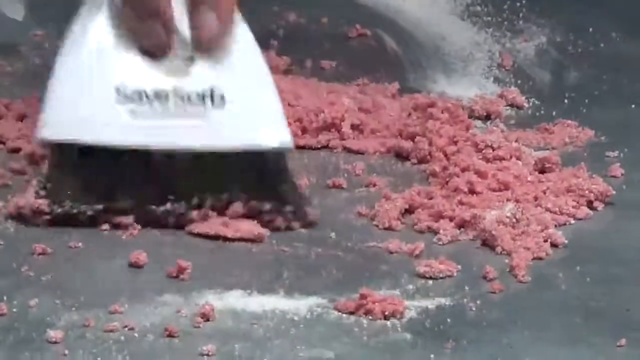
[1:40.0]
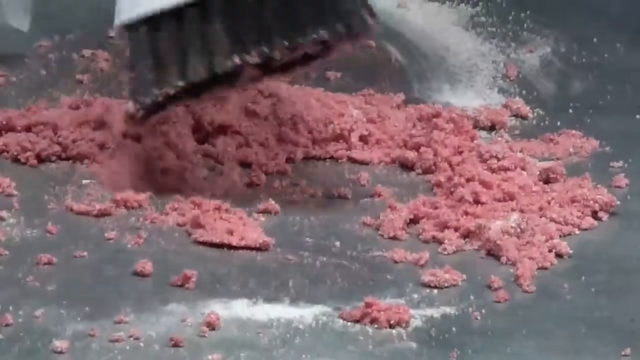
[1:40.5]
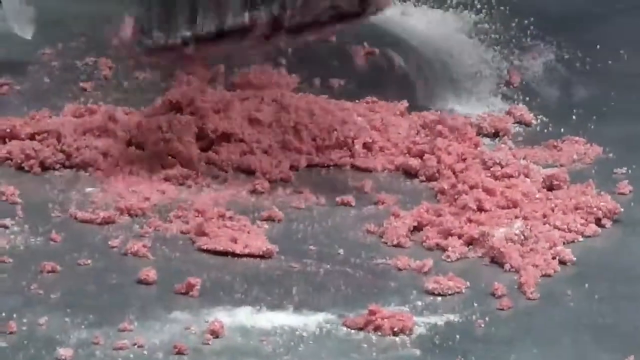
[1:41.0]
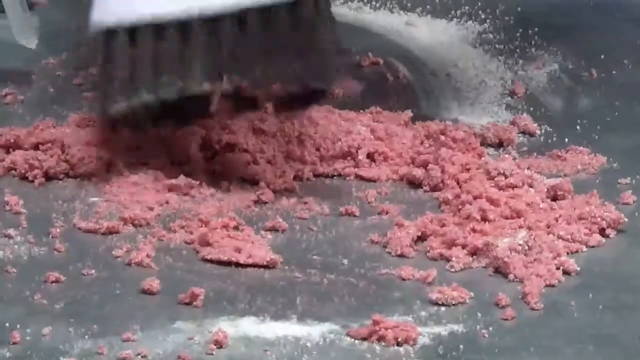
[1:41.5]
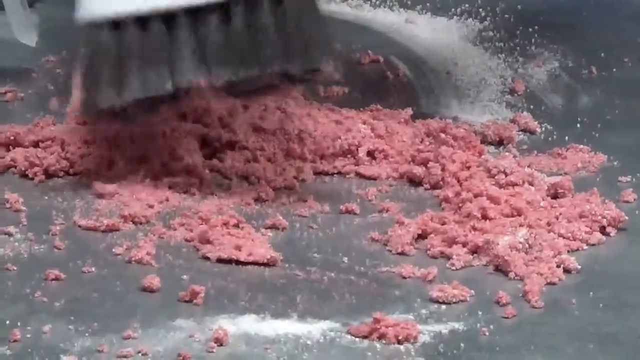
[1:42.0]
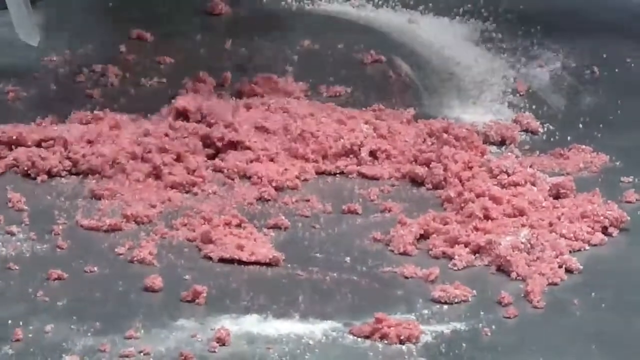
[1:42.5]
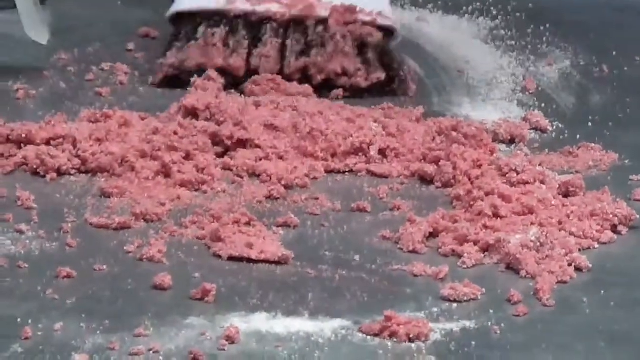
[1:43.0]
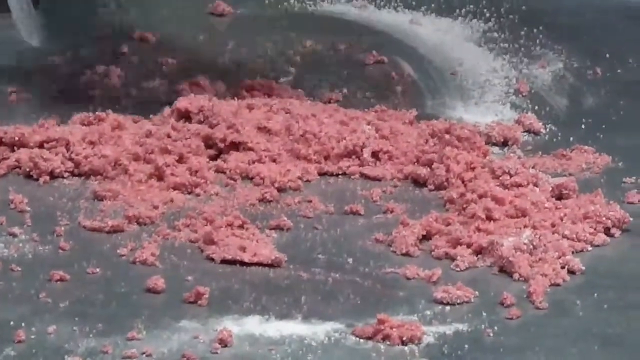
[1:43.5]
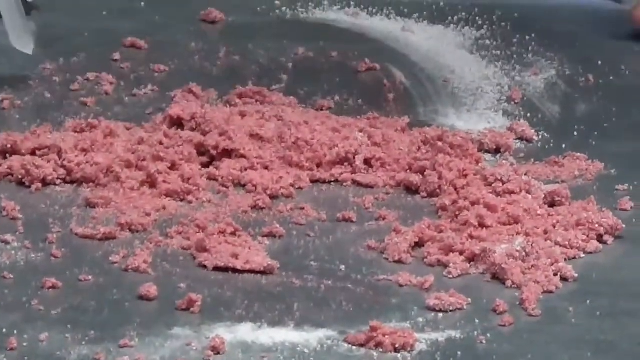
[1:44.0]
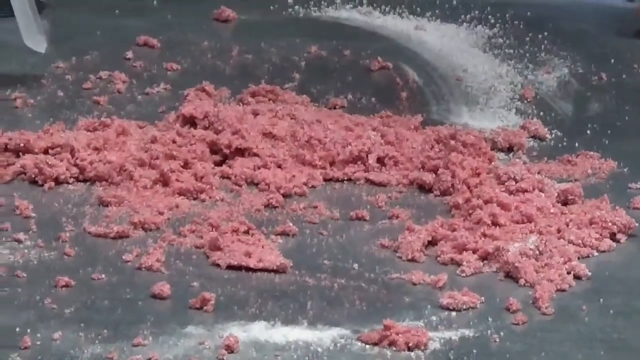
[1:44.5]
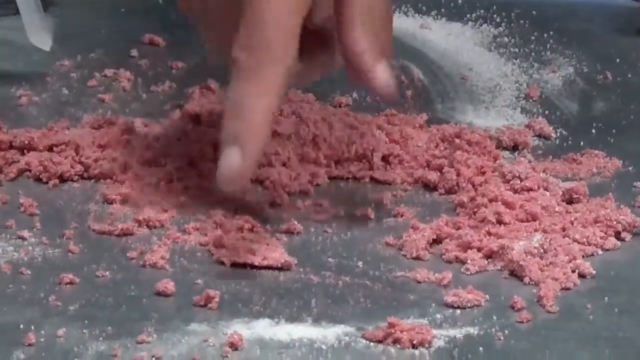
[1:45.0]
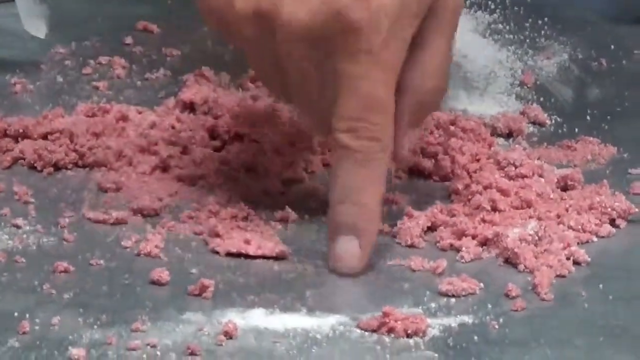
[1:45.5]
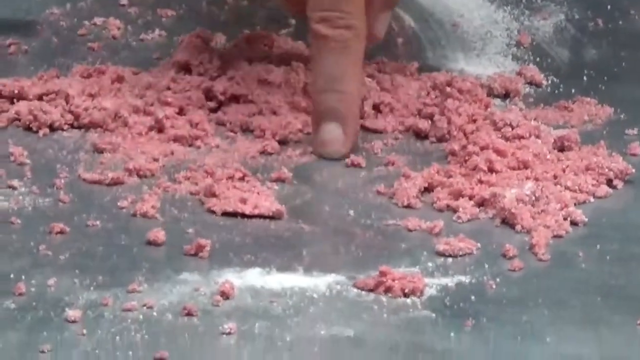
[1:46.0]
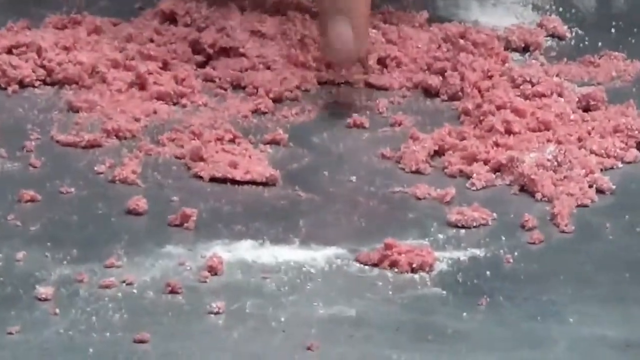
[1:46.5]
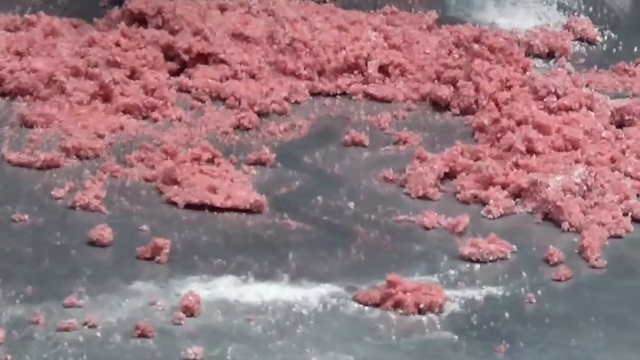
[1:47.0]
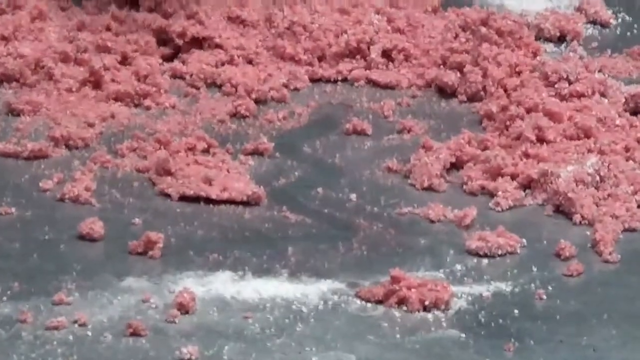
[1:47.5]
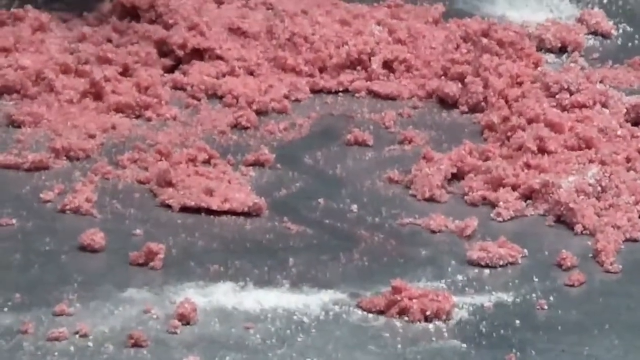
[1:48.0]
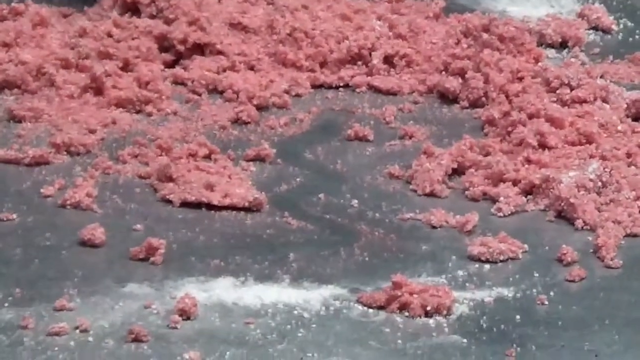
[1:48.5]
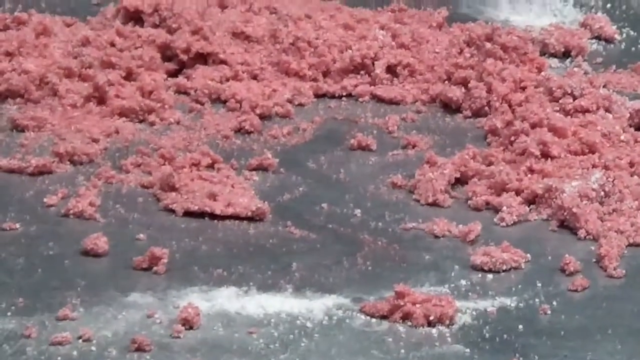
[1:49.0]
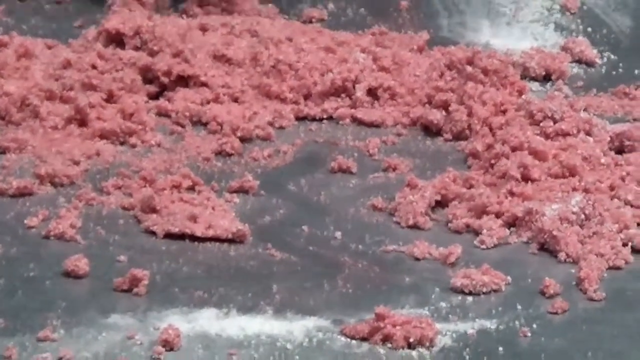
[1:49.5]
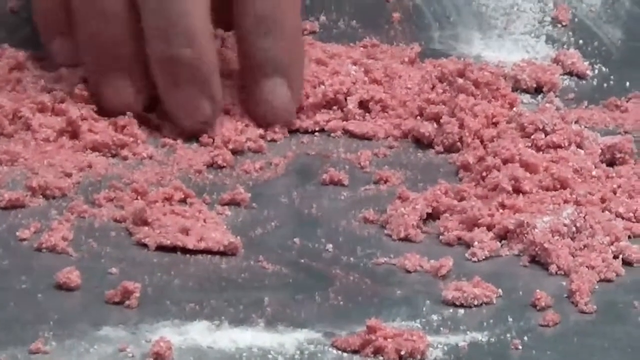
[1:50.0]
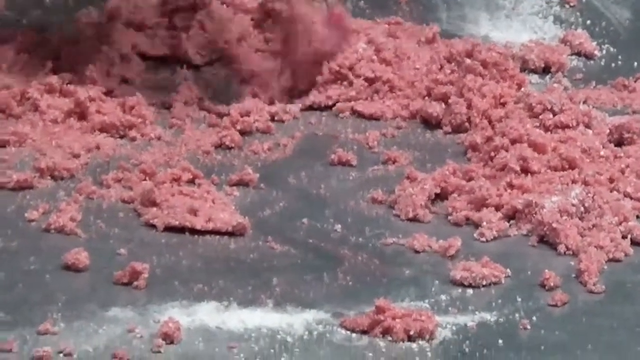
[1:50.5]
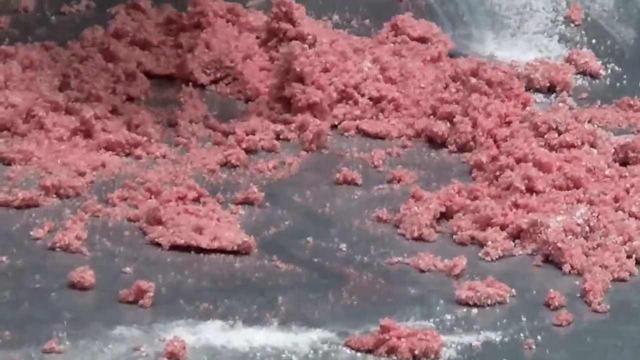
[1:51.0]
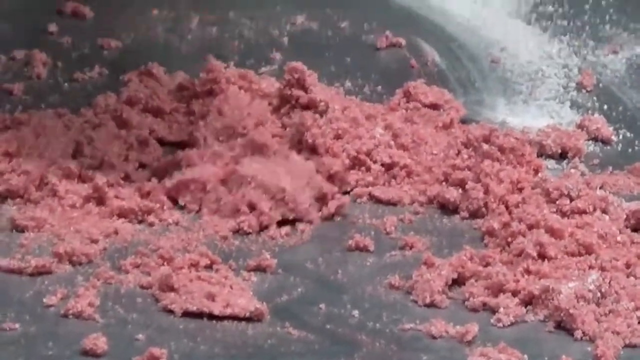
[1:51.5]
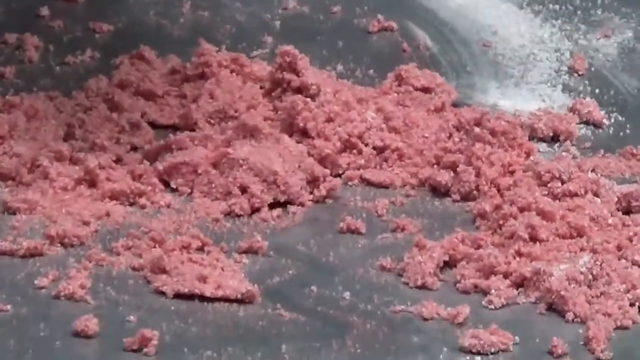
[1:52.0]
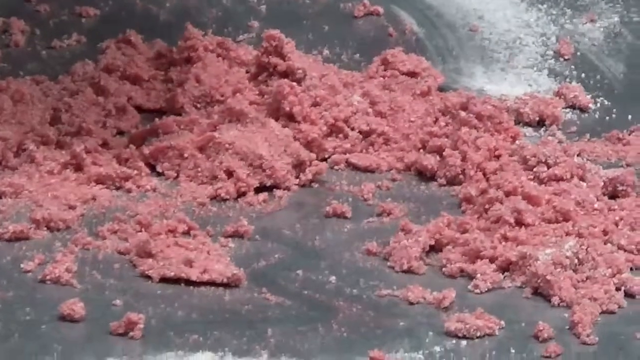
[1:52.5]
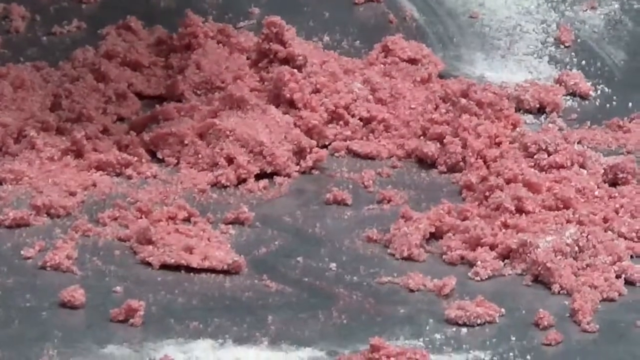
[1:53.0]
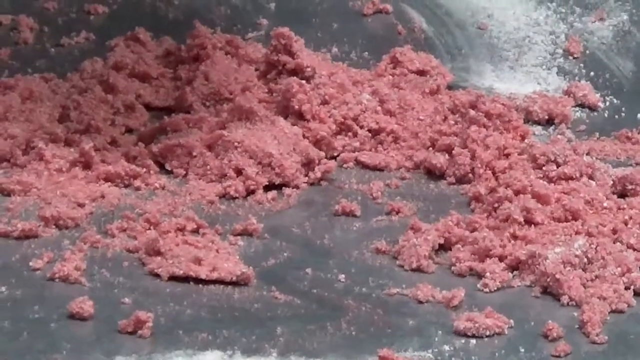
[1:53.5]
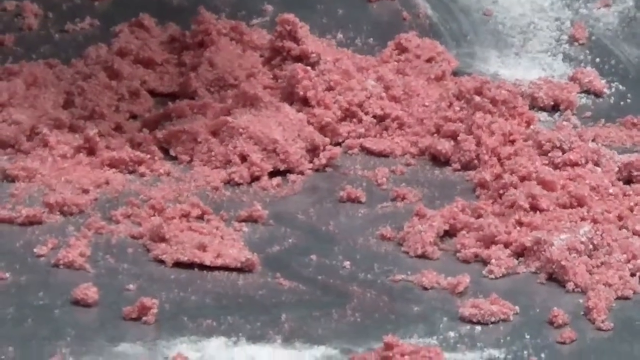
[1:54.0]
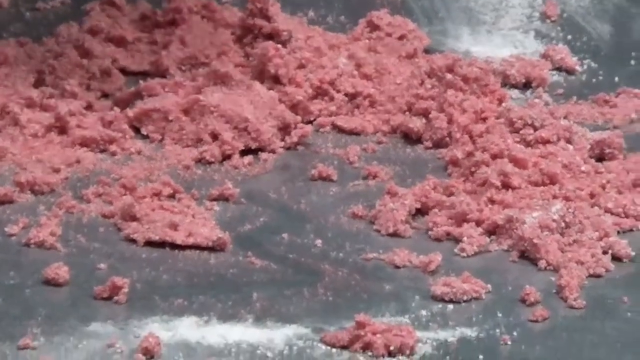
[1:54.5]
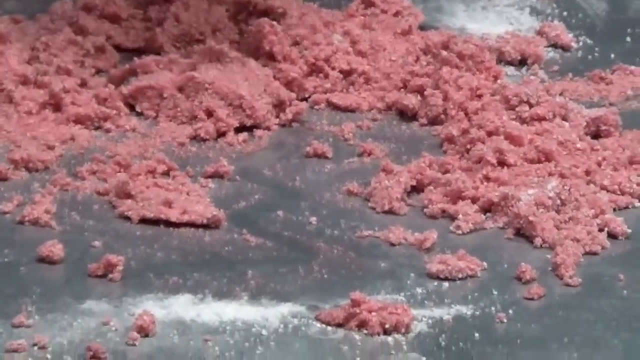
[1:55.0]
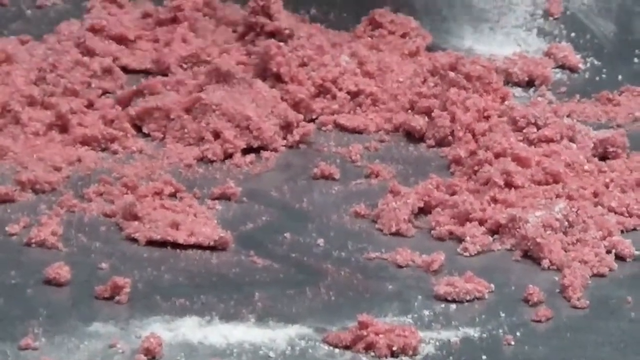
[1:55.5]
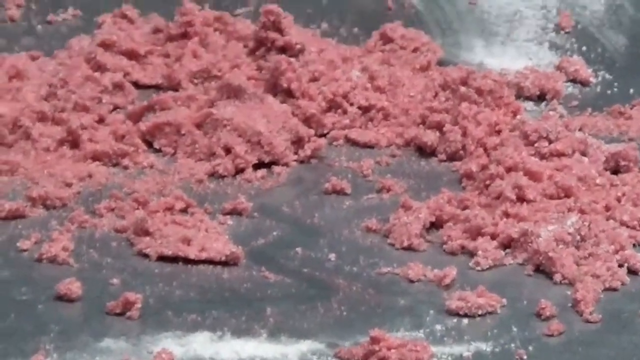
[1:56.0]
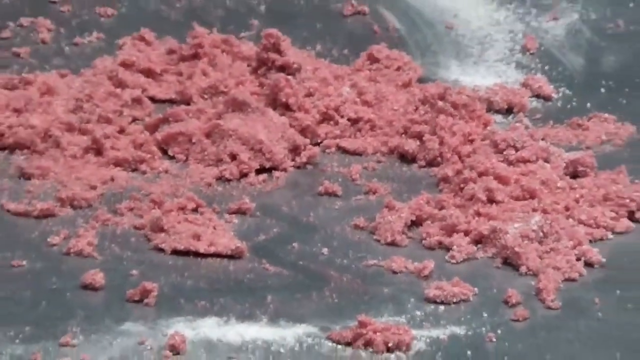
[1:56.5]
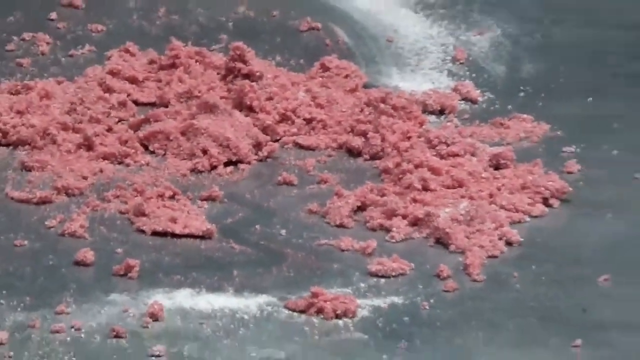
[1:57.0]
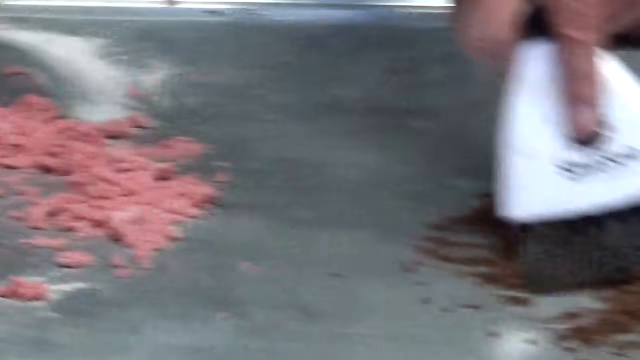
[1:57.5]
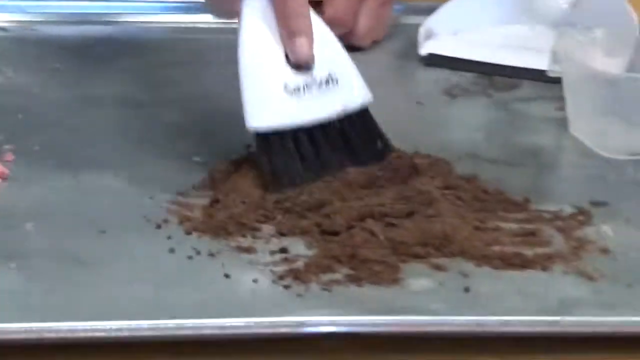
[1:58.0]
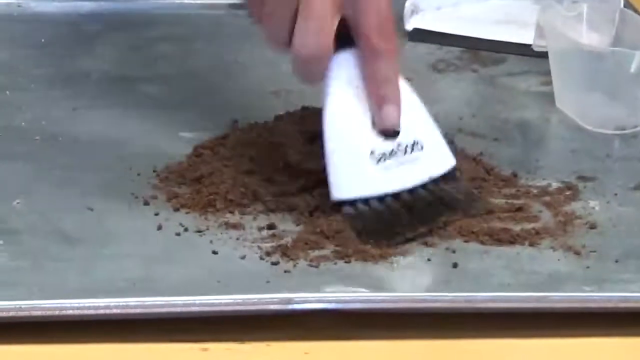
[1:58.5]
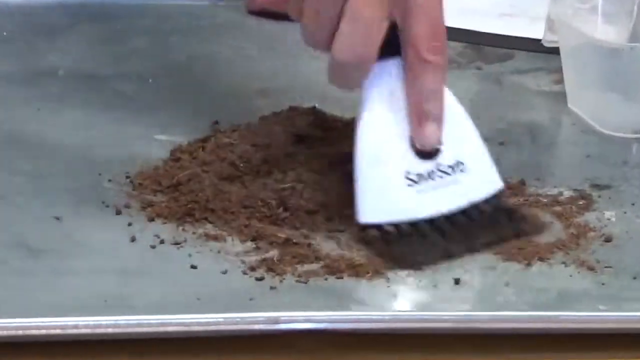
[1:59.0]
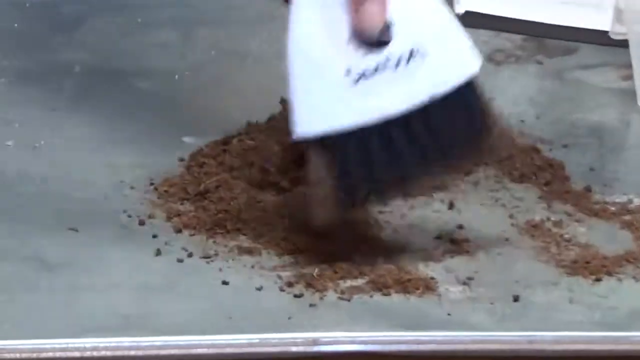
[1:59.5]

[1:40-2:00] The lumps of reddish pink product seem to have fully absorbed the red liquid, and the man holds the pan with his other hand for stability while mixing. Everything is on a wooden brown table and on a silver tray. The man seems to have mixed the products fully, and he dusts off the brush so no remnants are left on it. He picks up lumps of the new pink product and draws a zigzag with his finger on the tray to show that everything has completely dried. There seems to still be some white product that has not been mixed, but the liquid has dried. The man then turns his attention to the brown product.